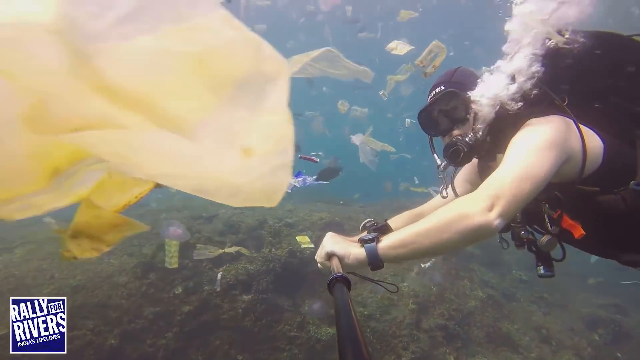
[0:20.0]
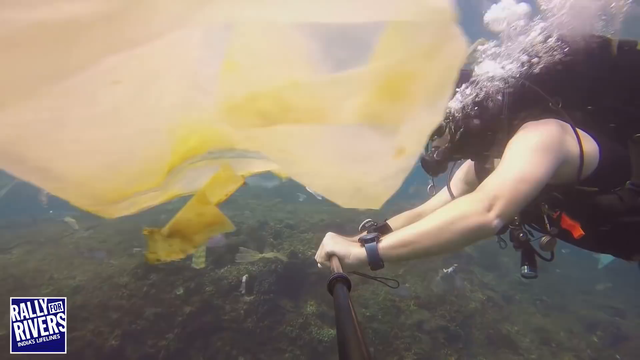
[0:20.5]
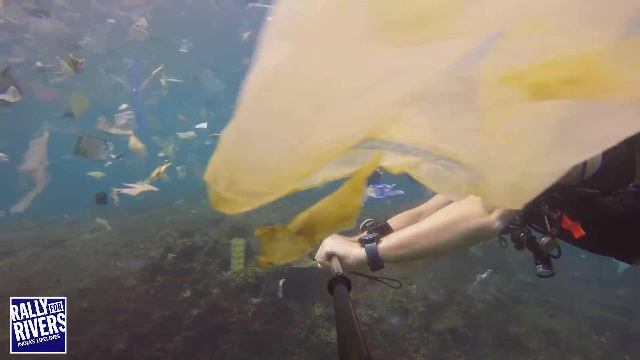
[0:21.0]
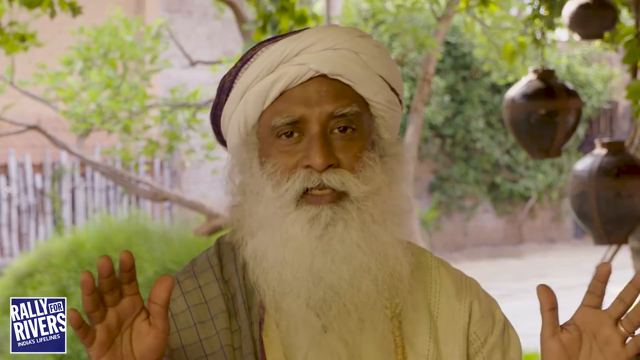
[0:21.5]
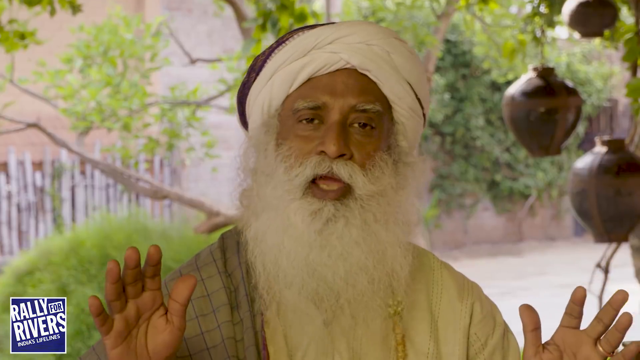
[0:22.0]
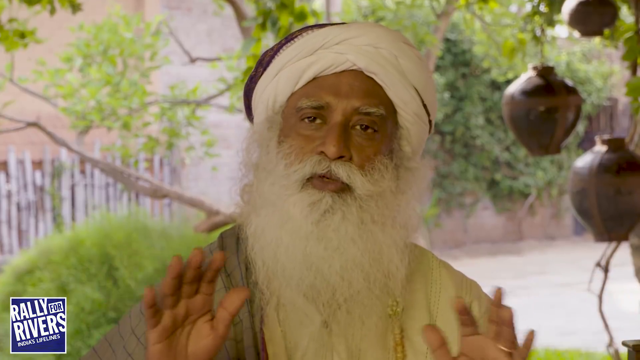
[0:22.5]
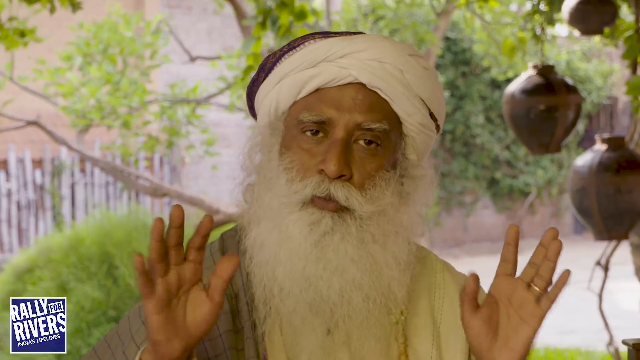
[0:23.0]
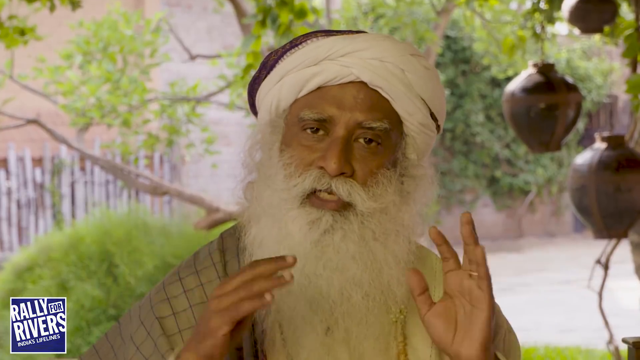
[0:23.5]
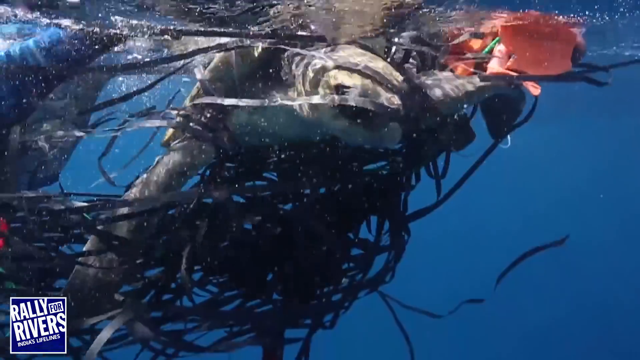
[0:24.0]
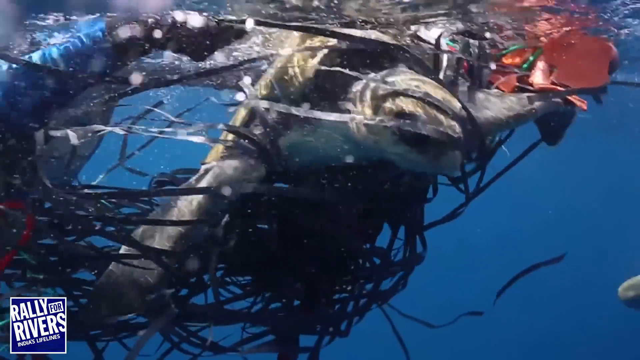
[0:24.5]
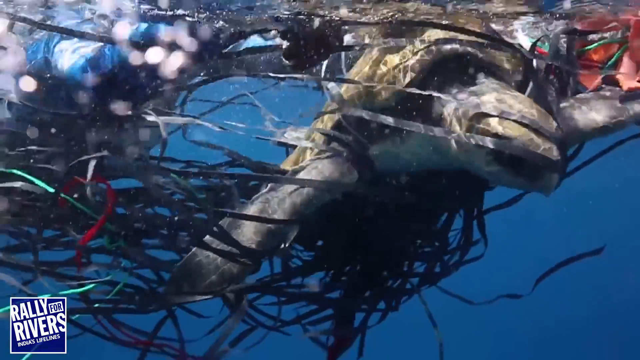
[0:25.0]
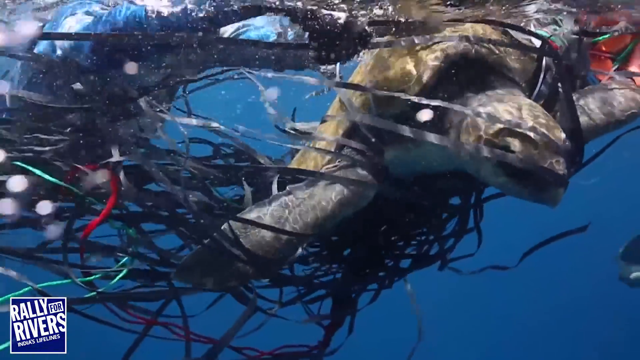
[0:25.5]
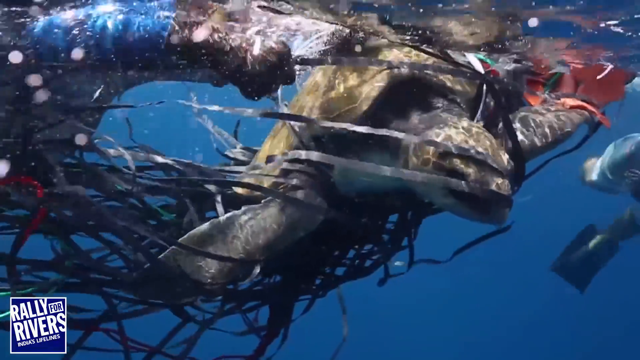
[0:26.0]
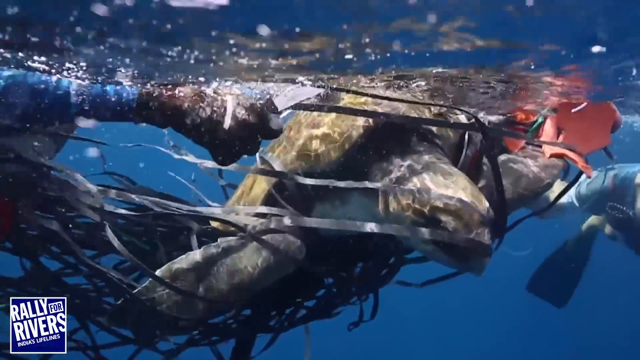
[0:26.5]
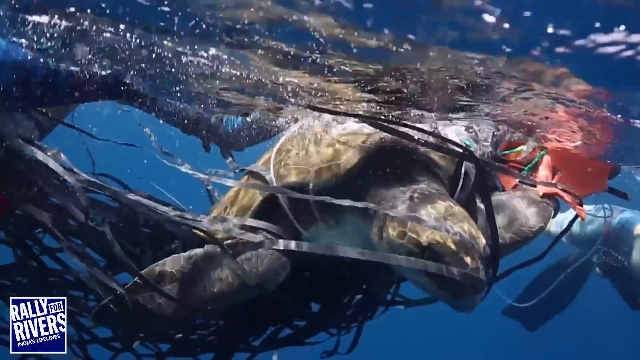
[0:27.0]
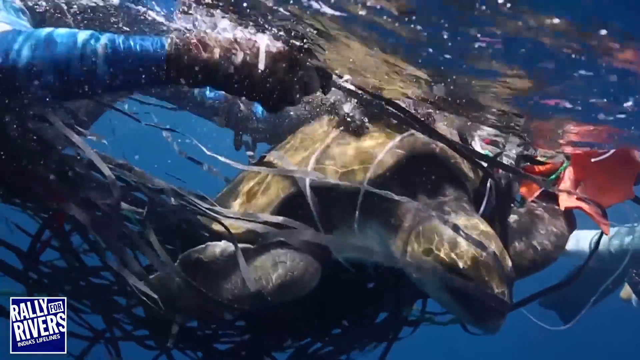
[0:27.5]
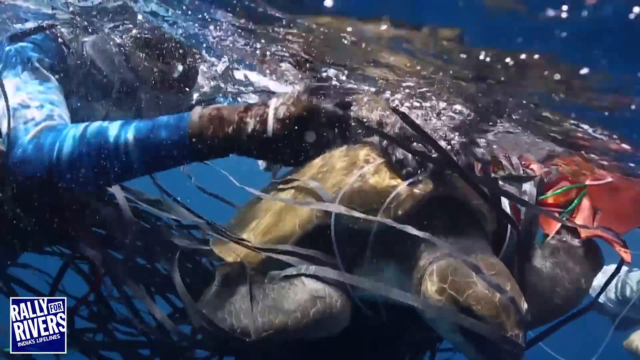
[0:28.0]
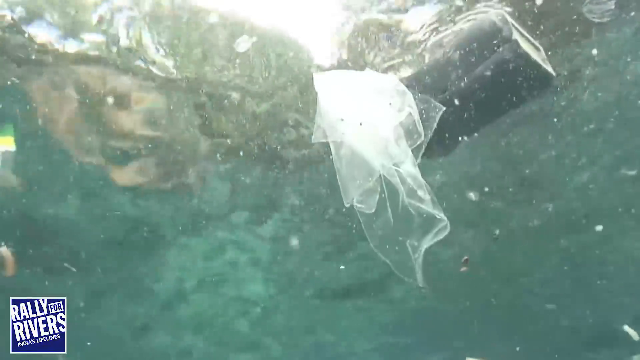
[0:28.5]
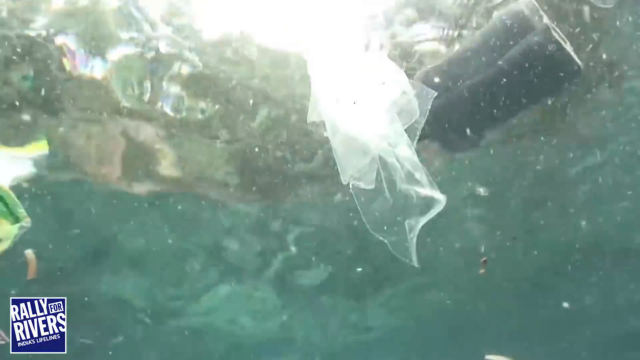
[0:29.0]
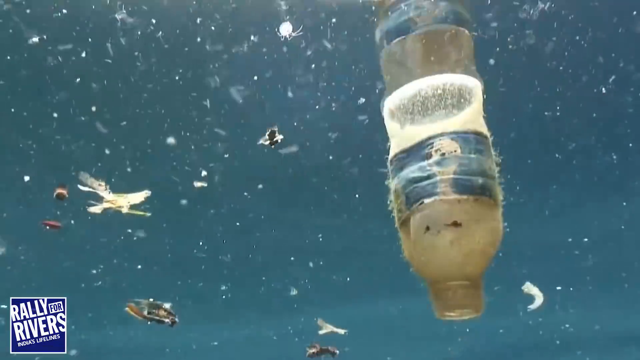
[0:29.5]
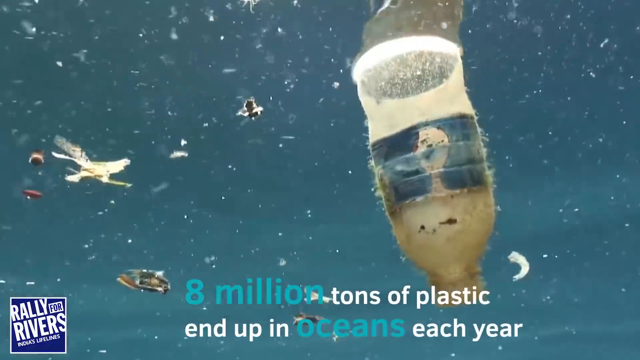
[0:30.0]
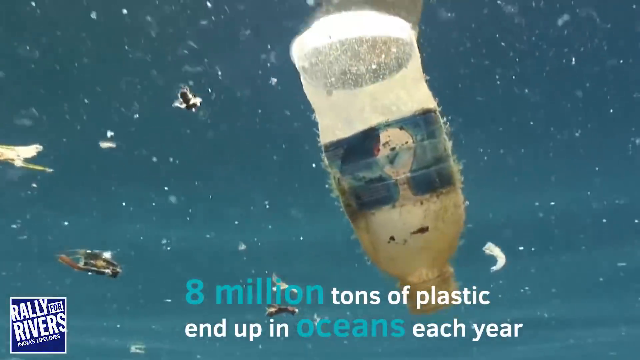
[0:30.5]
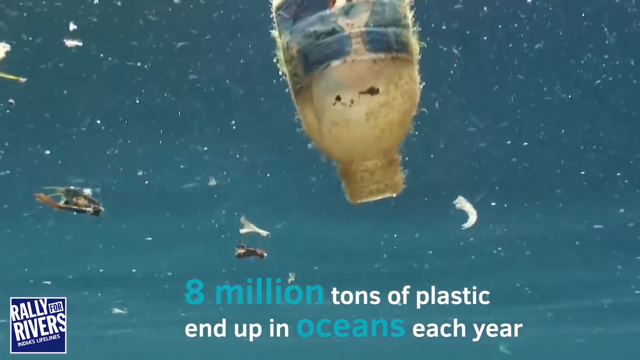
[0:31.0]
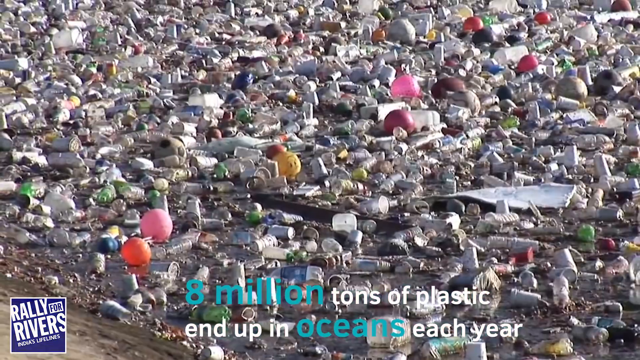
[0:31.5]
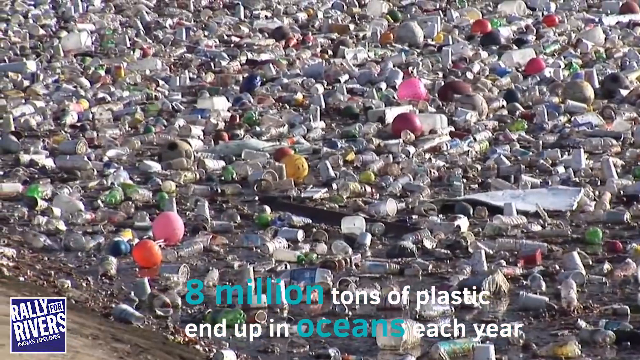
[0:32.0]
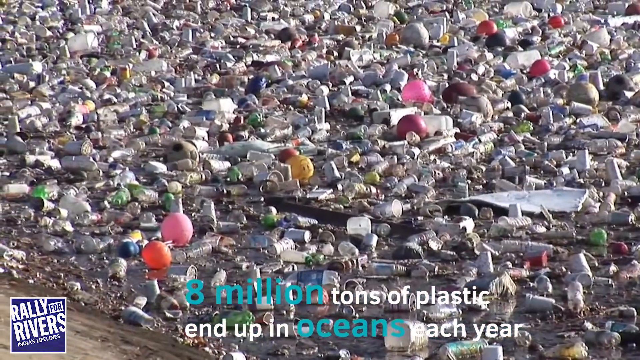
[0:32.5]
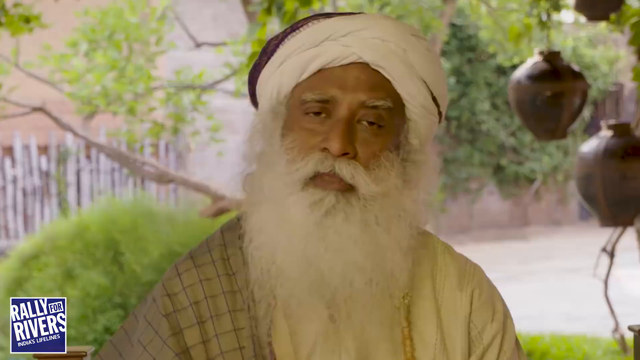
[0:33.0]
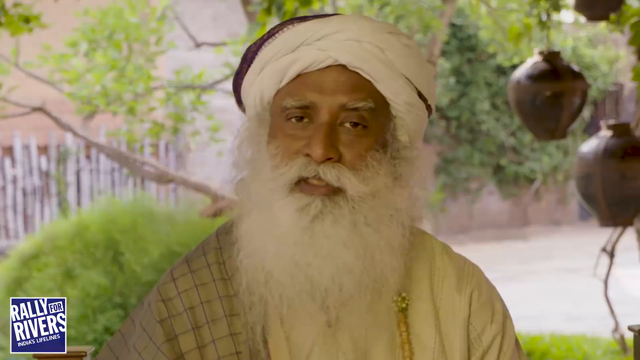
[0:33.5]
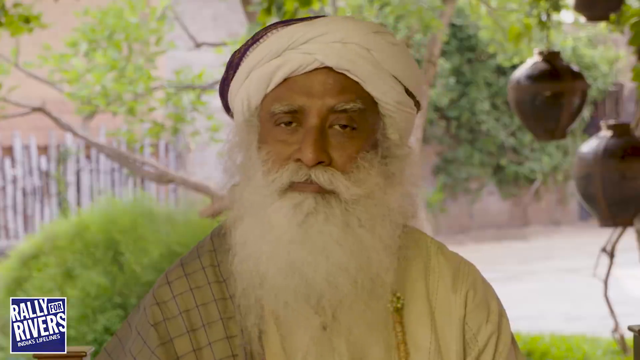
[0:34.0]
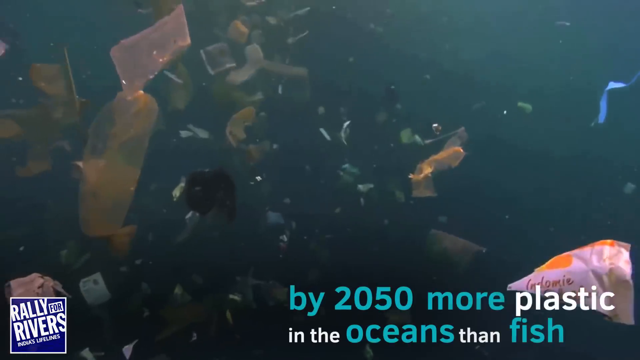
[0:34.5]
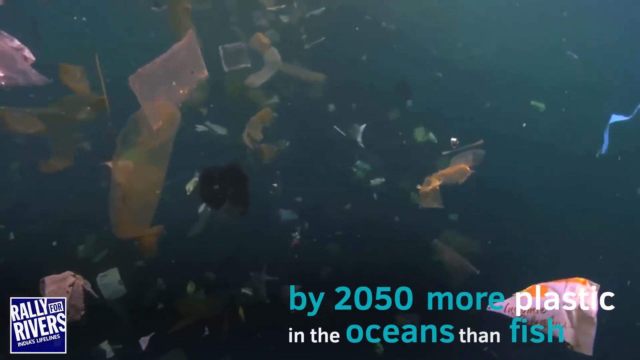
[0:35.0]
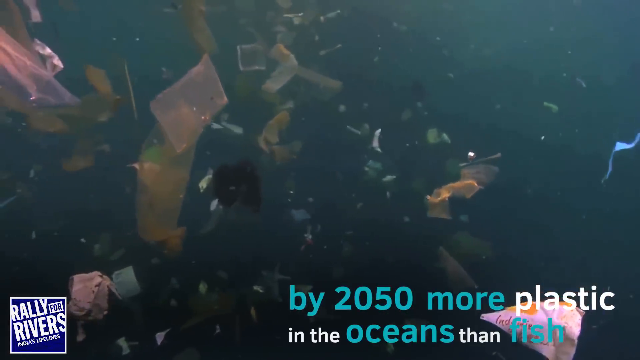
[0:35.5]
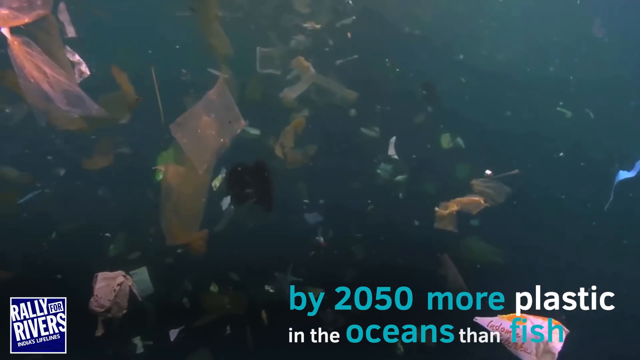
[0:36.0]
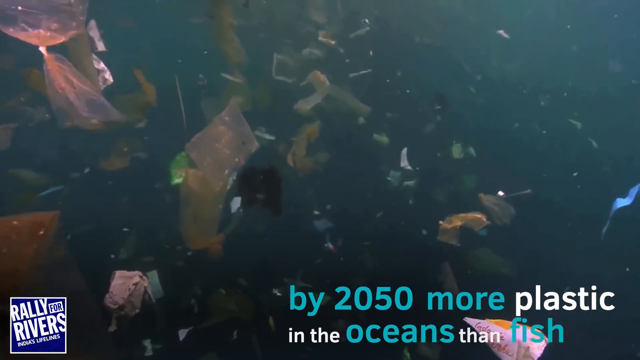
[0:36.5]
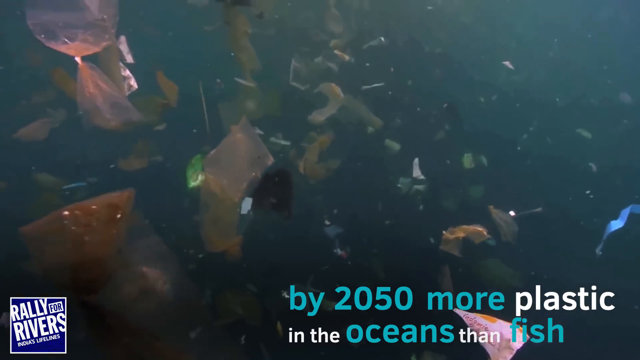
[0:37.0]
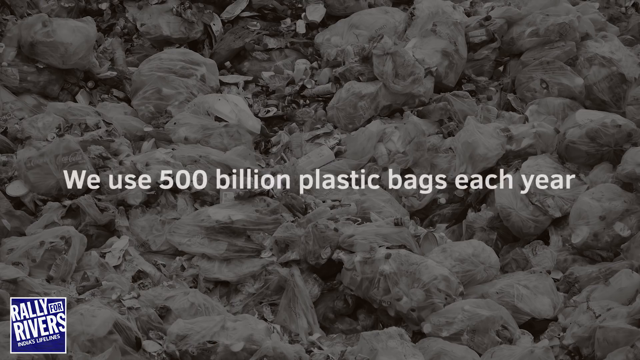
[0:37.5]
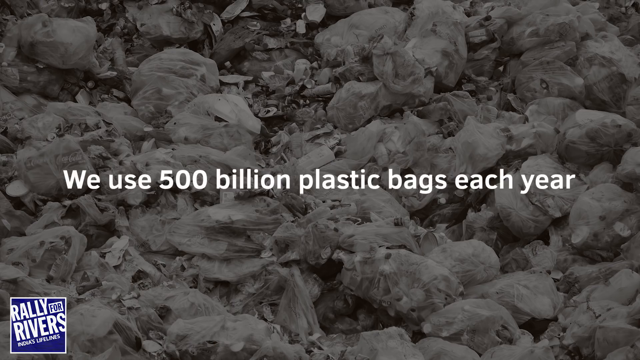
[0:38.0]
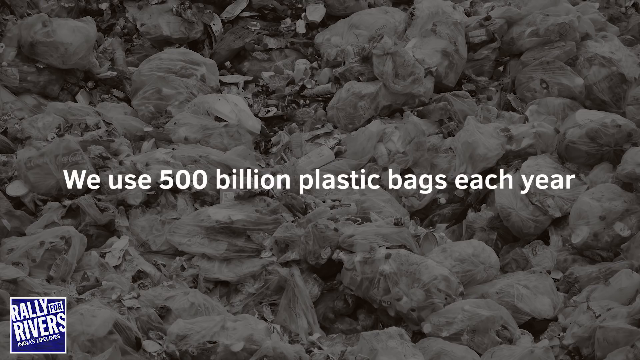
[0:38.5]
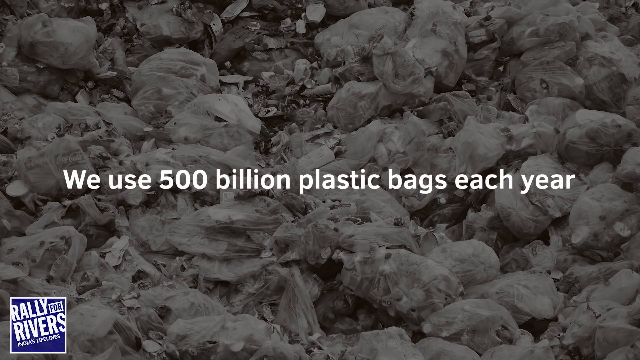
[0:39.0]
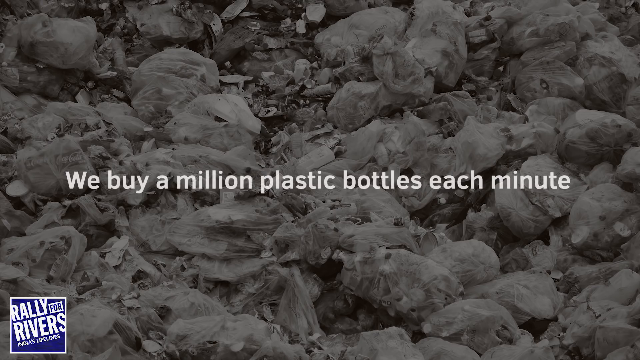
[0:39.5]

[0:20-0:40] A man is under what looks like ocean water, with plastic debris everywhere and fish swimming through the trash. The video then shows an older man who looks like he may be Indian. He wears a turban and a lot of Indian garb, and has a very long, full white mustache and beard. He appears to be sitting, possibly in his backyard or yard, with a couple of pots hanging on the right side behind him. A logo for Rally for Rivers is at the bottom left of the screen. On-screen words begin "by 2015 plastic will," giving a statistic about plastic.